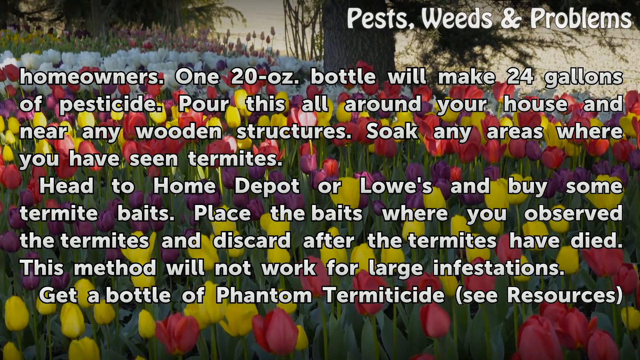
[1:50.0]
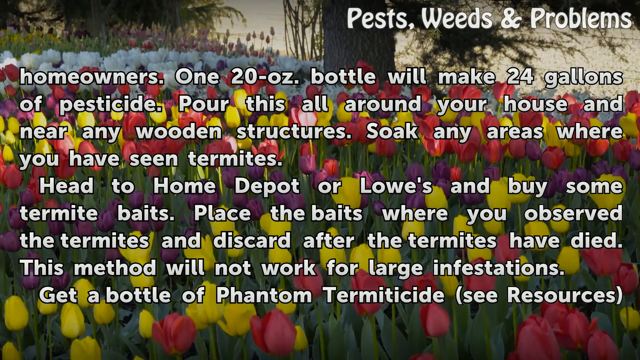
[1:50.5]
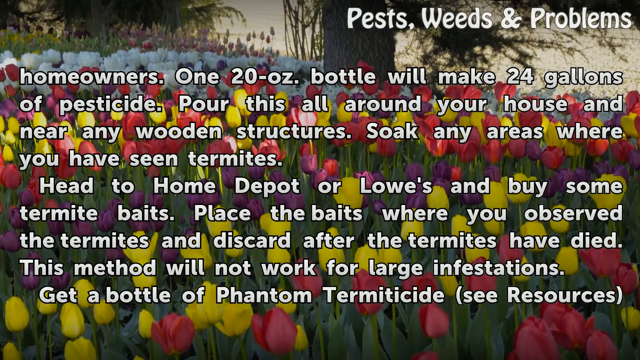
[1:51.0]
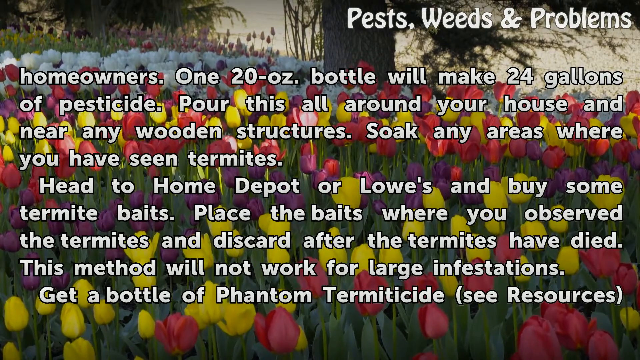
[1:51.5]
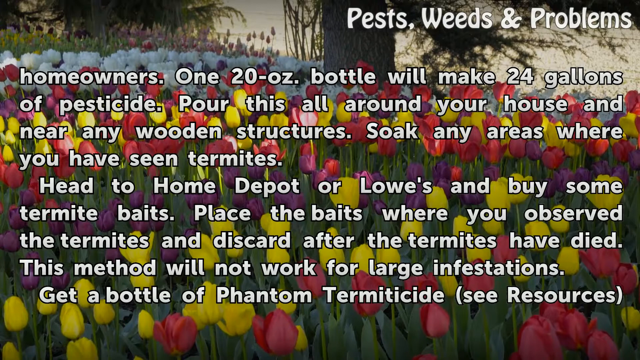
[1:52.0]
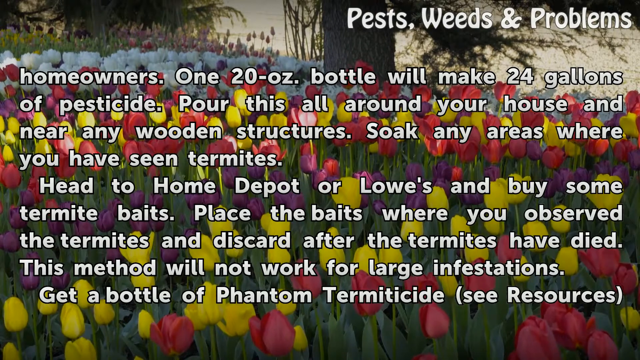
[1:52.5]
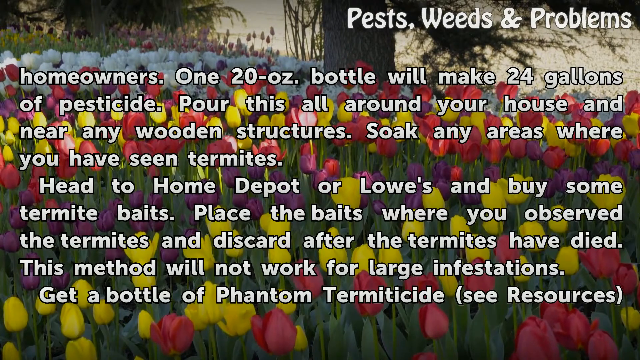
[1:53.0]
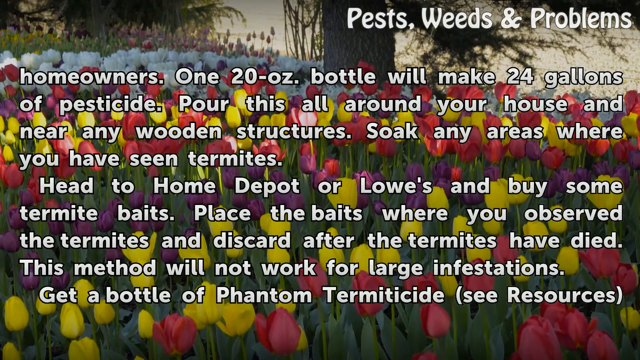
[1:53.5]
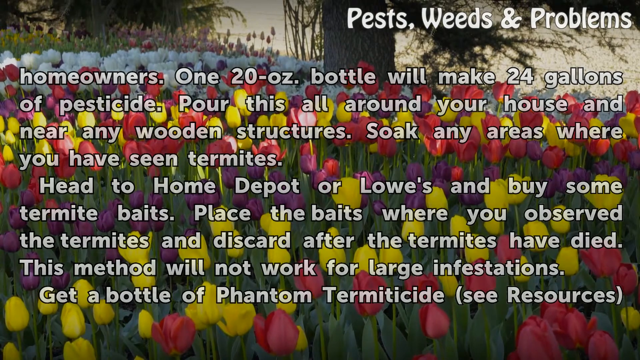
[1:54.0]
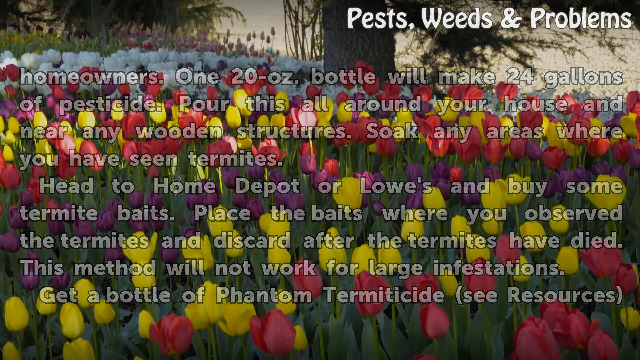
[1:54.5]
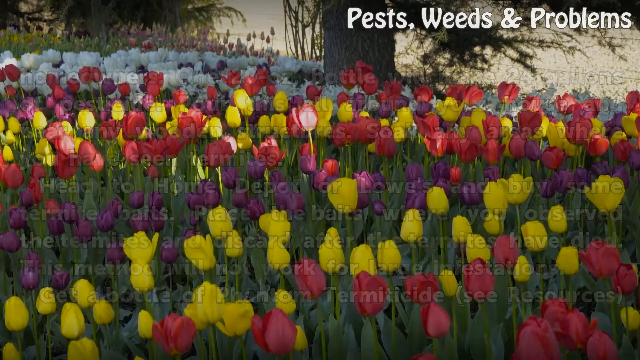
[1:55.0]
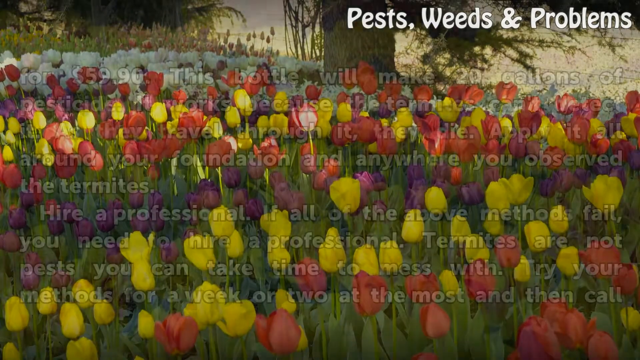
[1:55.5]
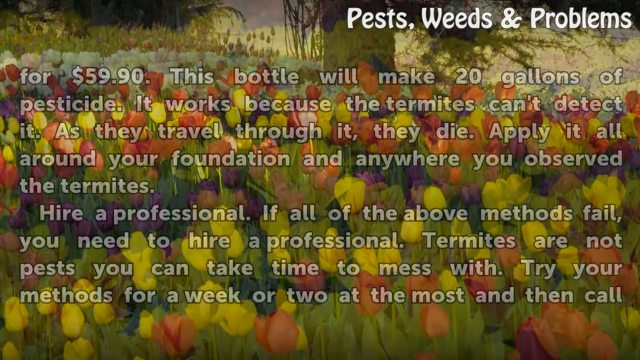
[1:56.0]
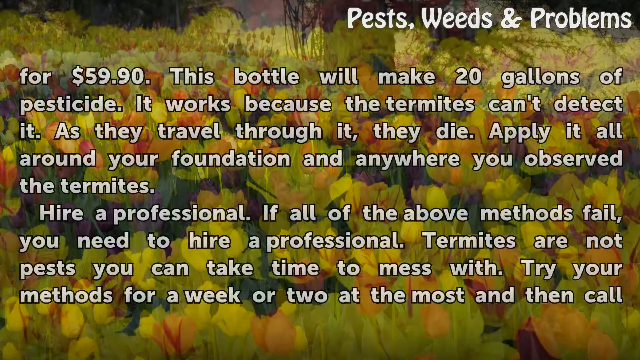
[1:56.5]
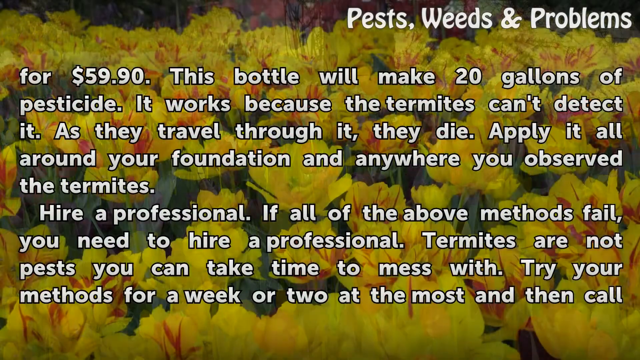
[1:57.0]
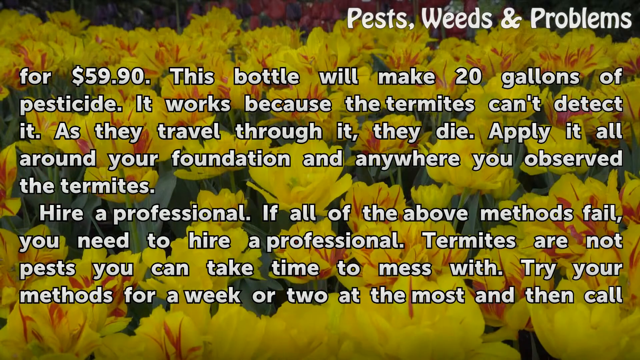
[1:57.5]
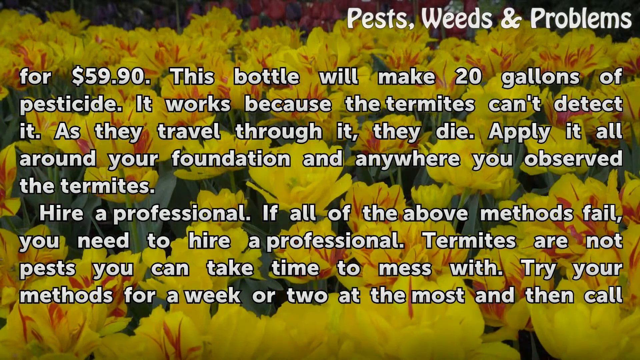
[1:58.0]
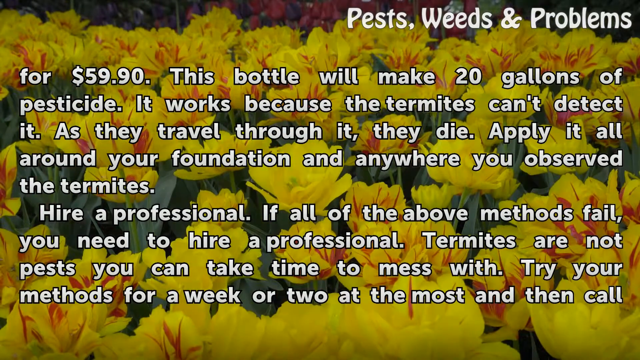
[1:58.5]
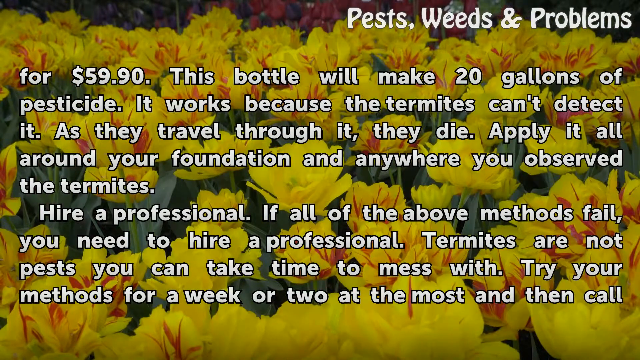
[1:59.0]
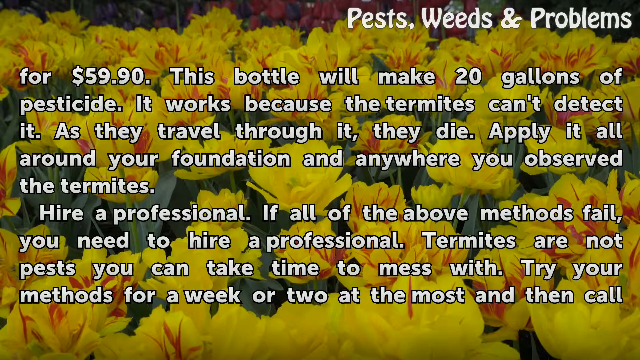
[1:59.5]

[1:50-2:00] The text fades and is replaced by a new page of text. At the same time, the shot cuts to a closer angle of lots of tulips growing in a field; these unusual tulips have yellow petals with red stripes. The text reads: "for $59.90, this bottle will make 20 gallons of pesticide. It works because the termites can't detect it. As they travel through it, they die. Apply it all around your foundation and anywhere you observe the termites. Hire a professional. If all of the above methods fail, you need to hire a professional. Termites are not pests you can take time to mess with. Try your methods for a week or two at the most and then call..."